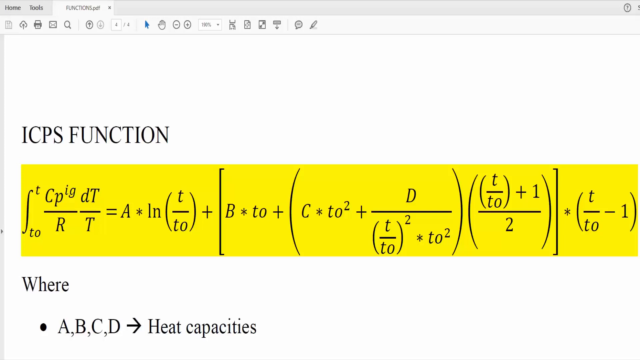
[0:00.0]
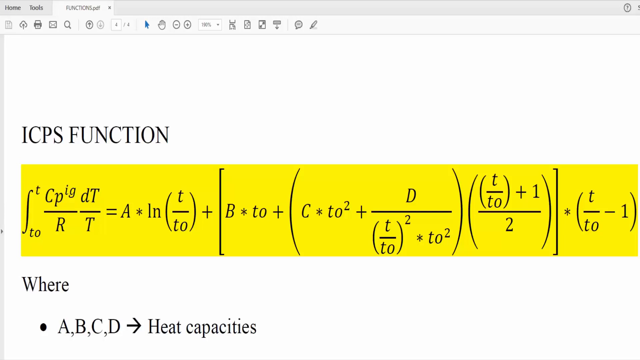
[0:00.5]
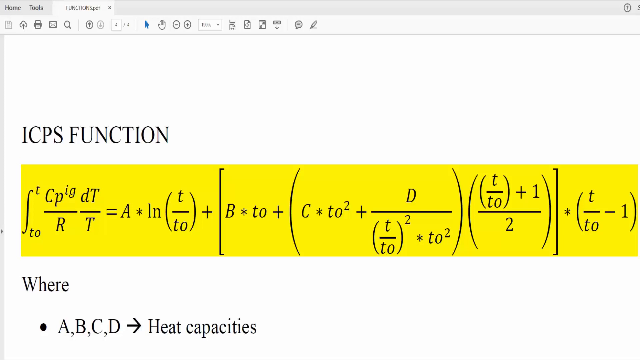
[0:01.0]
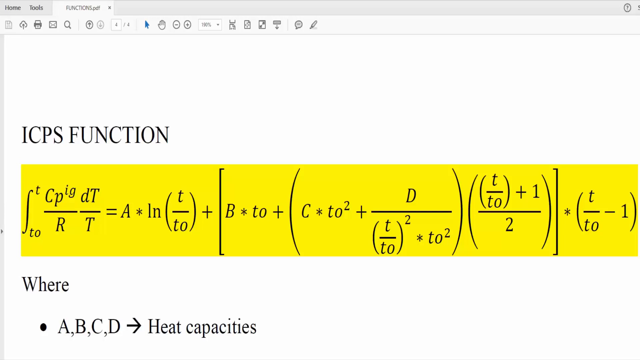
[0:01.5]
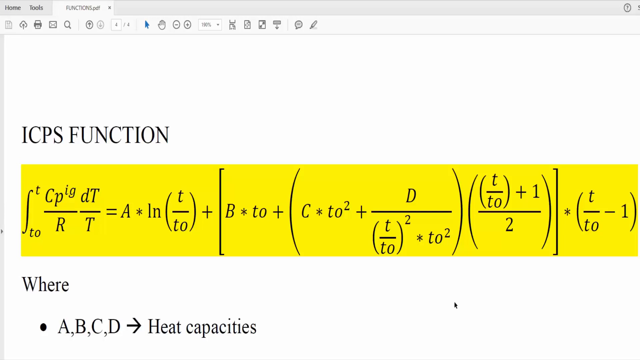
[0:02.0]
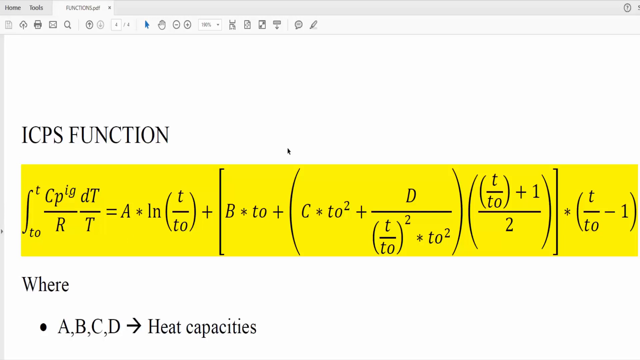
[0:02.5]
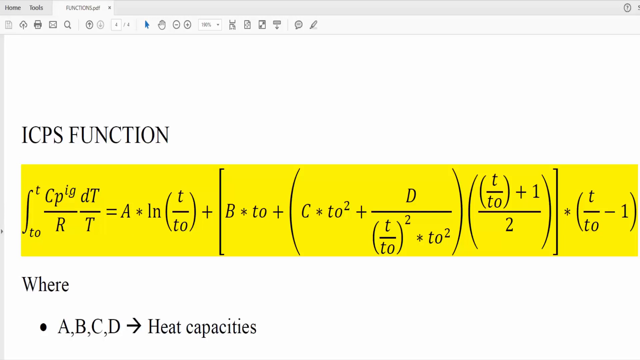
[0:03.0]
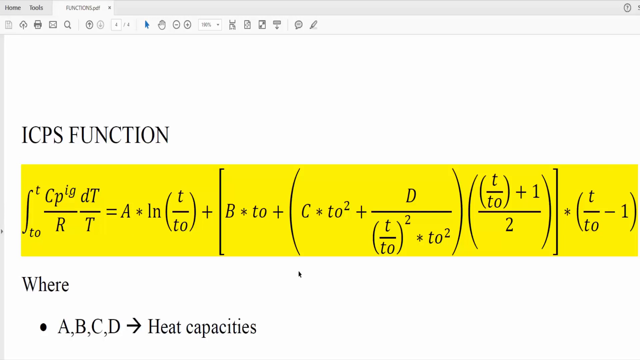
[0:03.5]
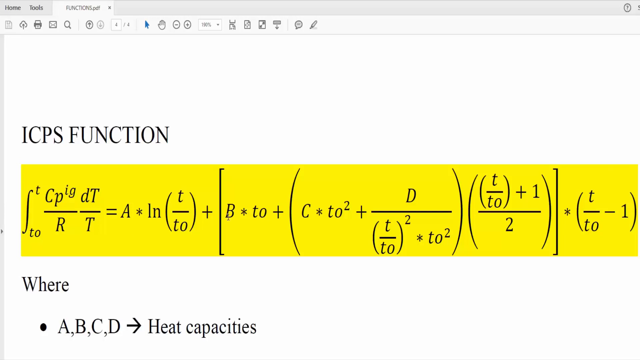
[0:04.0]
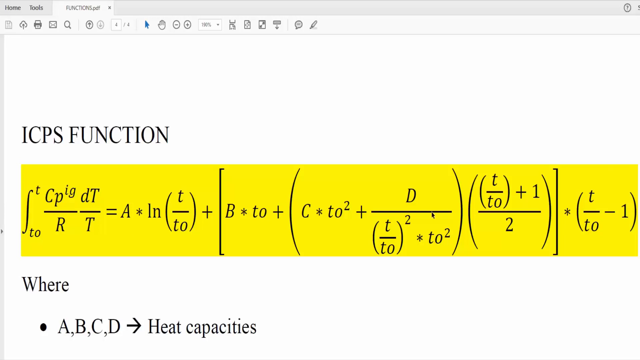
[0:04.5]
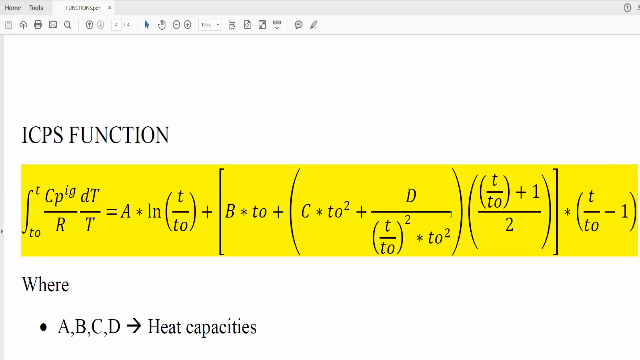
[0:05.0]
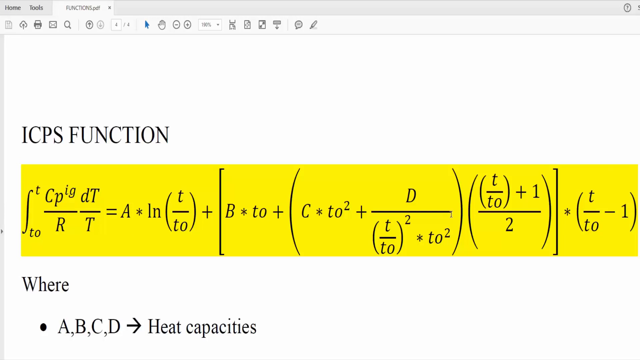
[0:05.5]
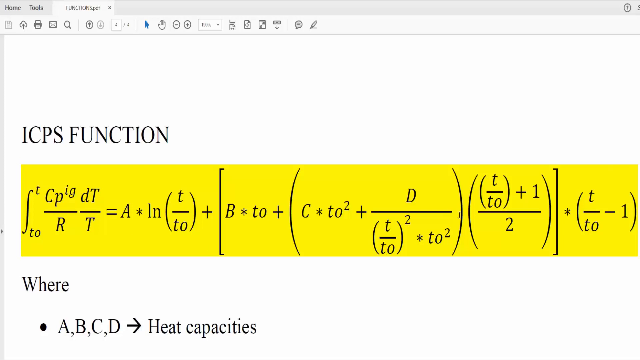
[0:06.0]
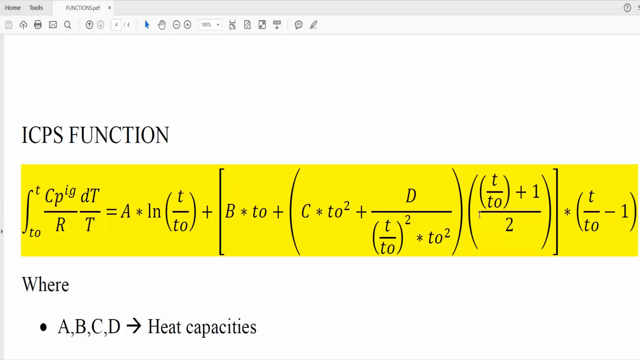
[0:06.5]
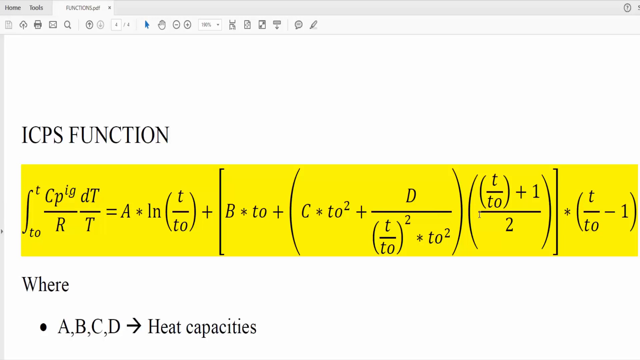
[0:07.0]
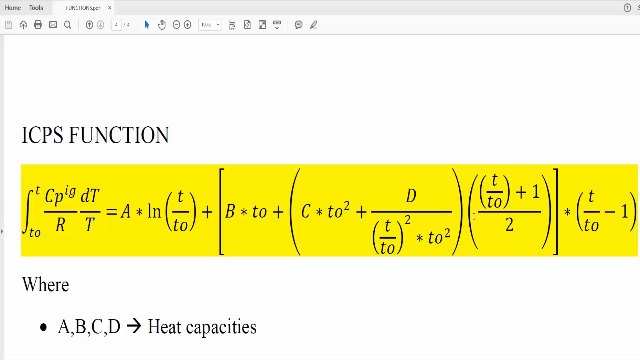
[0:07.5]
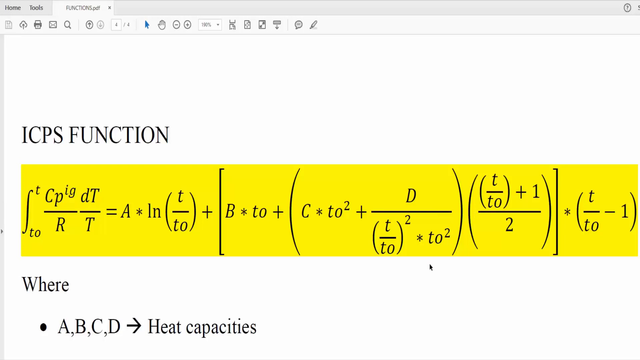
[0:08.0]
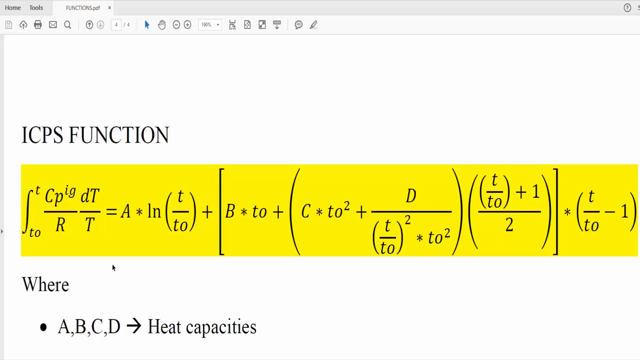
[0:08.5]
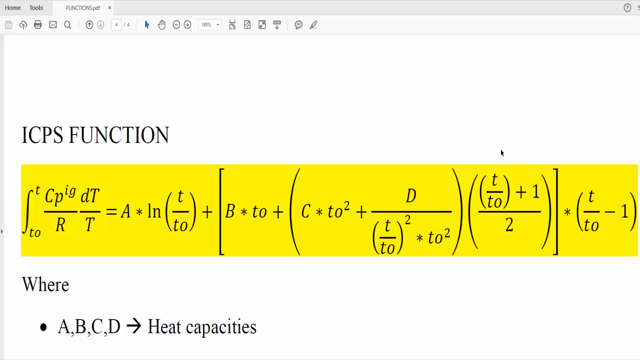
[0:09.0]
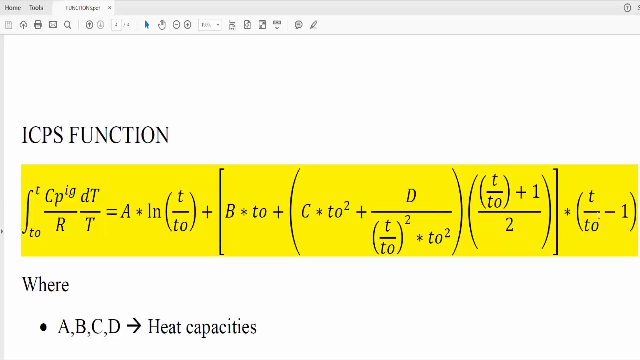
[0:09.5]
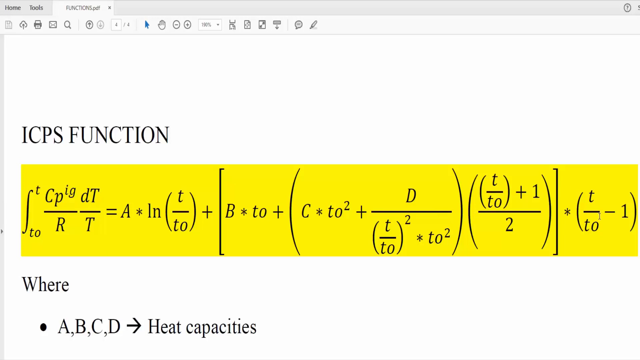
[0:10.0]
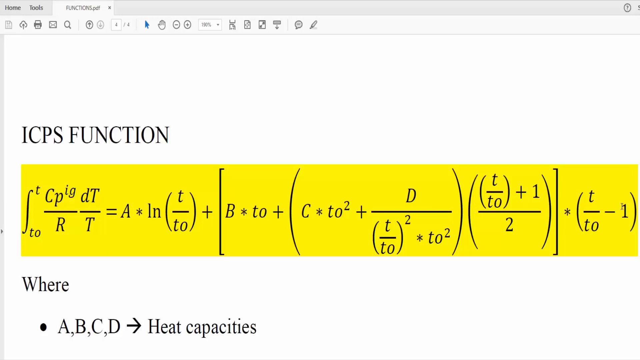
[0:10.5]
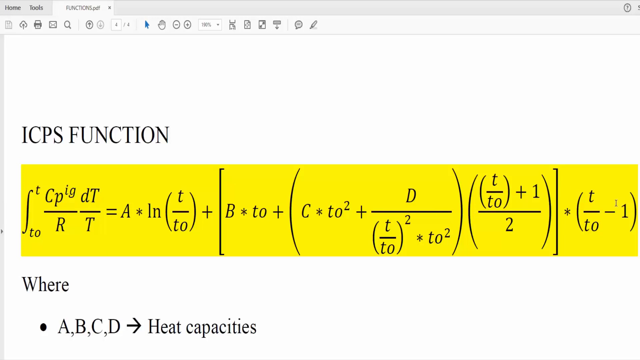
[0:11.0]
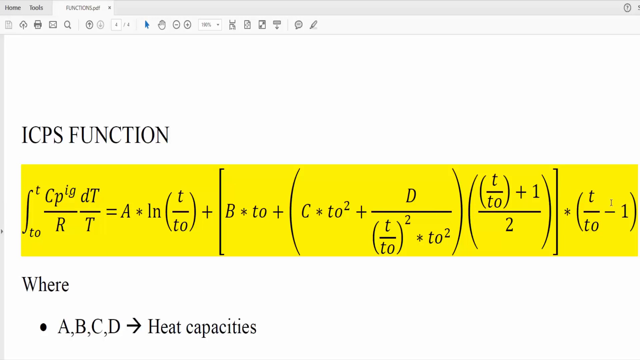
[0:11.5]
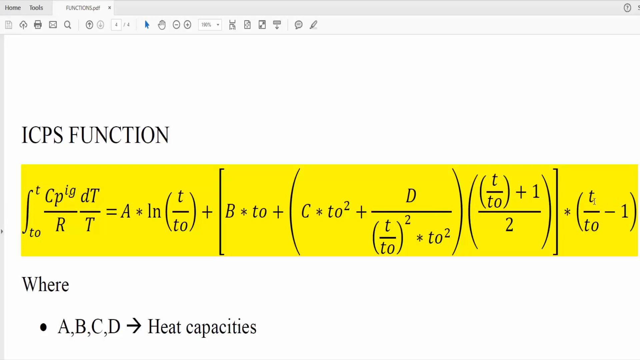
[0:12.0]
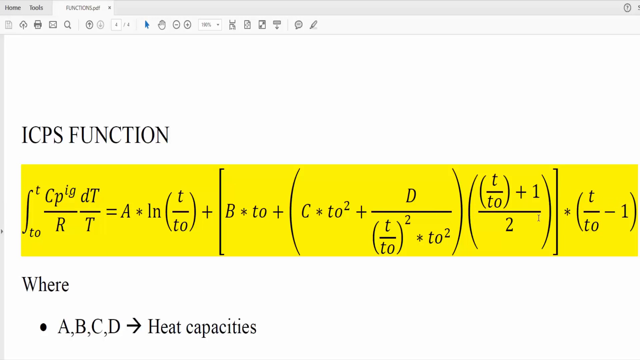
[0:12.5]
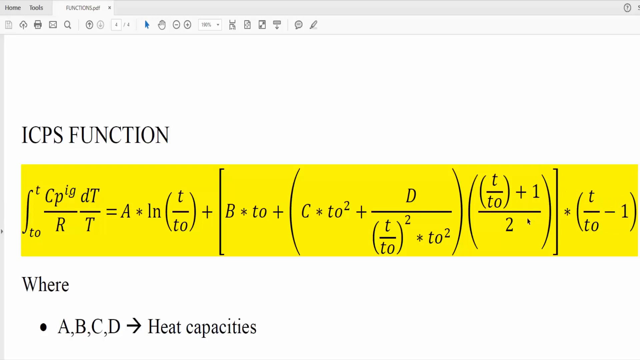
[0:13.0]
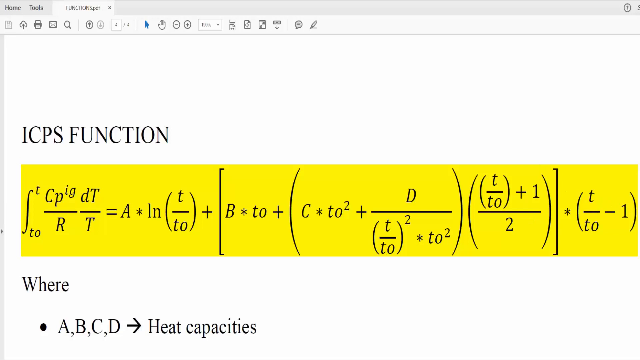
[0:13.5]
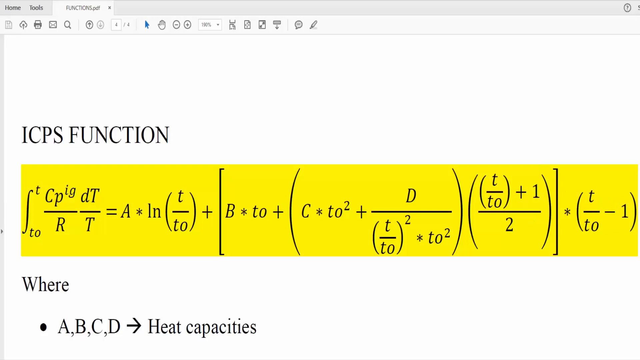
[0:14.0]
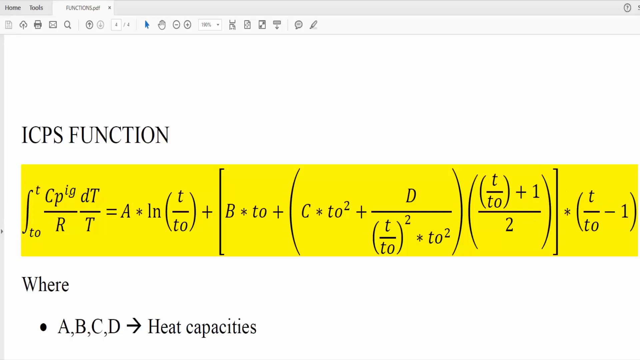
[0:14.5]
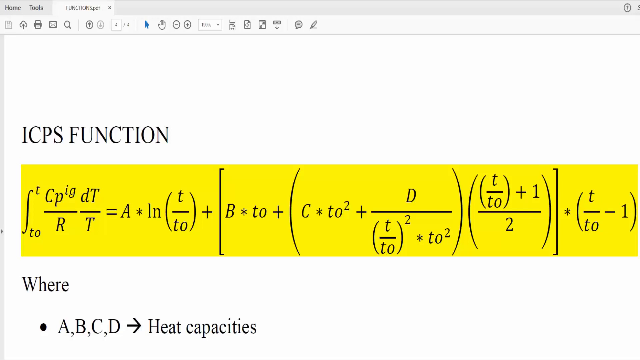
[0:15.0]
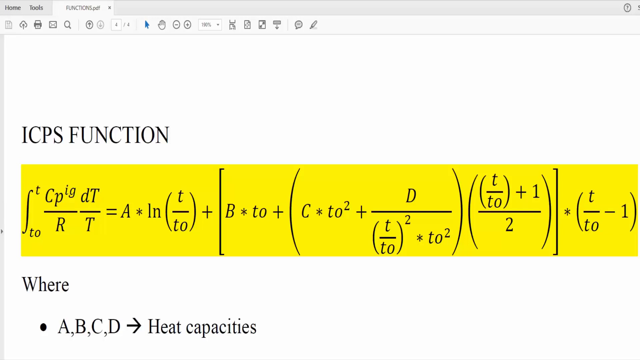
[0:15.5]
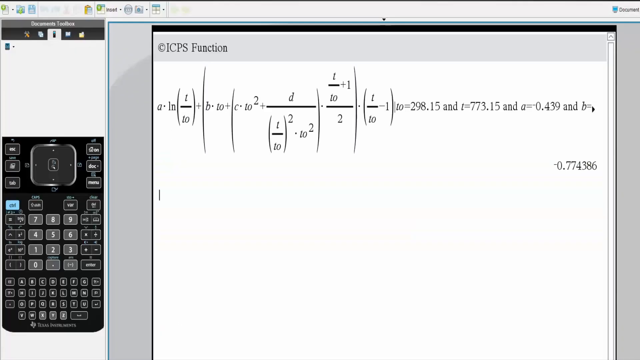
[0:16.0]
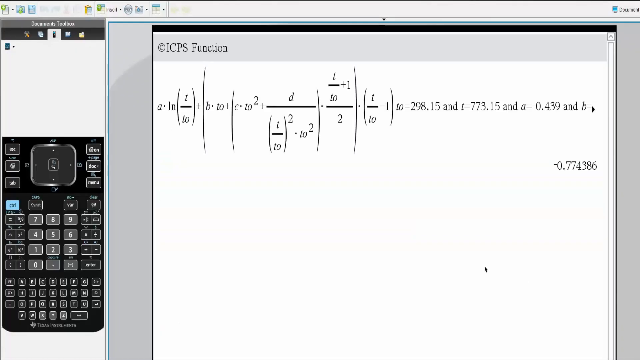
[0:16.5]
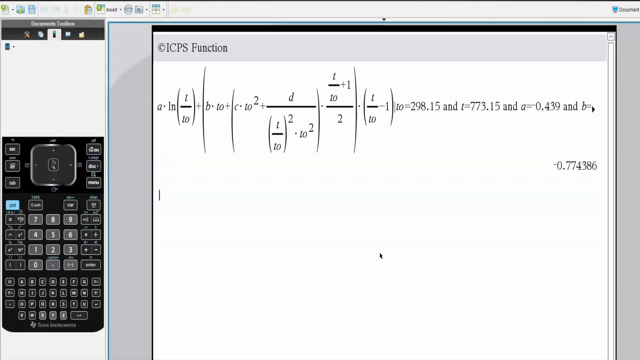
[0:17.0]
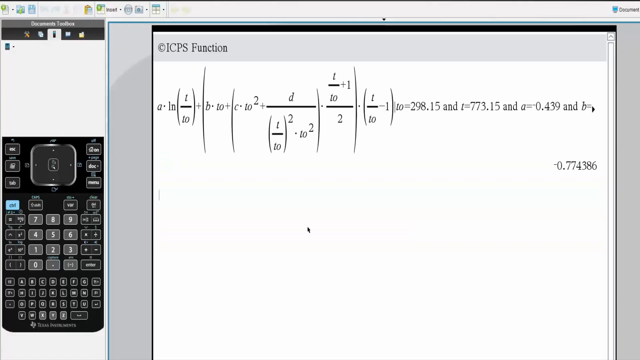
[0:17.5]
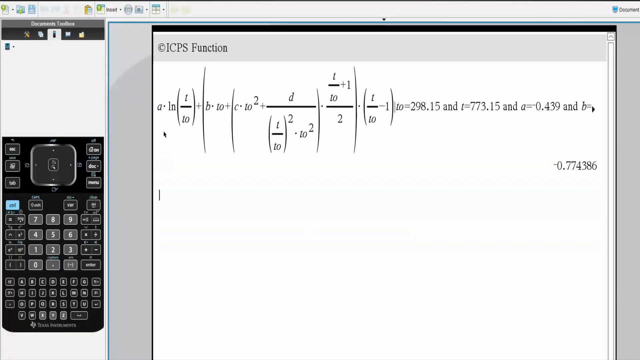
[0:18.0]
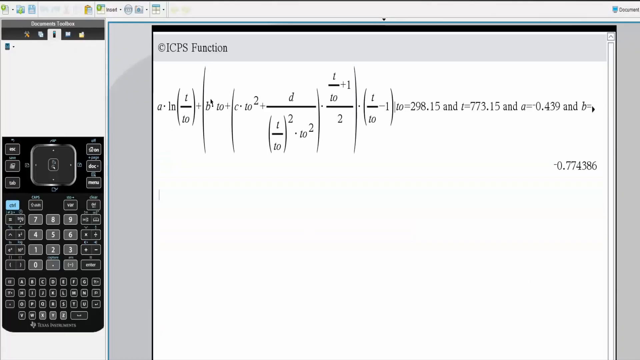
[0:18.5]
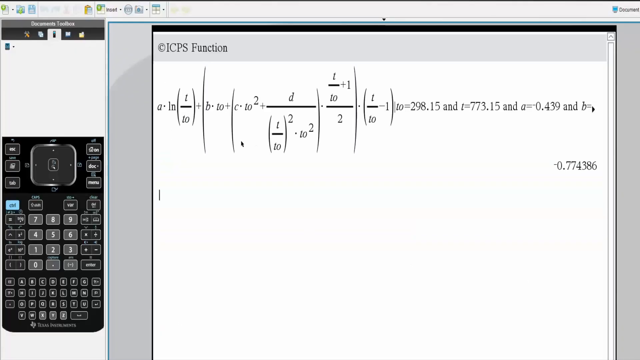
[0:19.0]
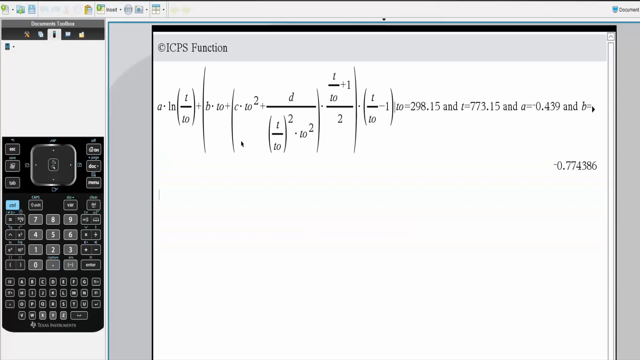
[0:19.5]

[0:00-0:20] A PDF file is on screen while someone moves the cursor around, apparently explaining what is shown; it seems to be a presentation of some kind, possibly by a math professor. The header of the PDF reads "ICPS function," and below it is an enormous, intricate math function that takes up the entire width of the document. Underneath the function, which is highlighted in yellow, text reads "where A, B, C, D" followed by a right arrow and "heat capacities." The cursor moves around the formula as if the person is explaining something.